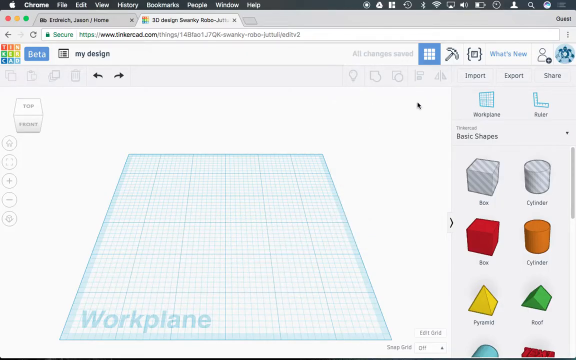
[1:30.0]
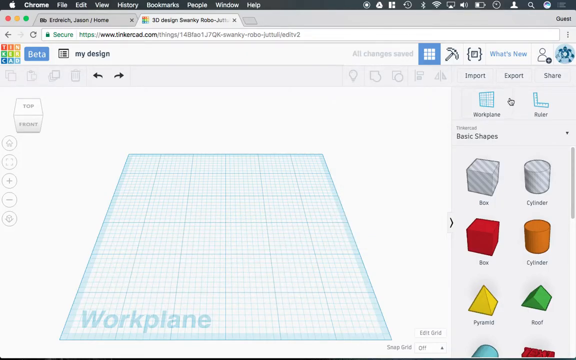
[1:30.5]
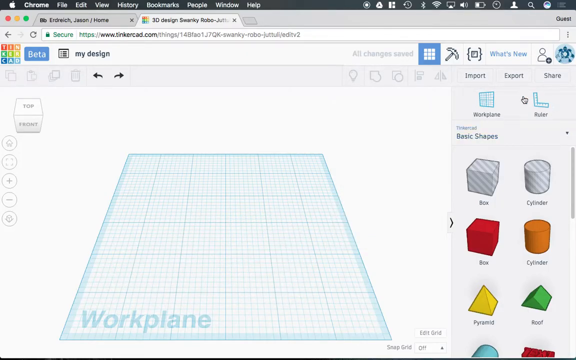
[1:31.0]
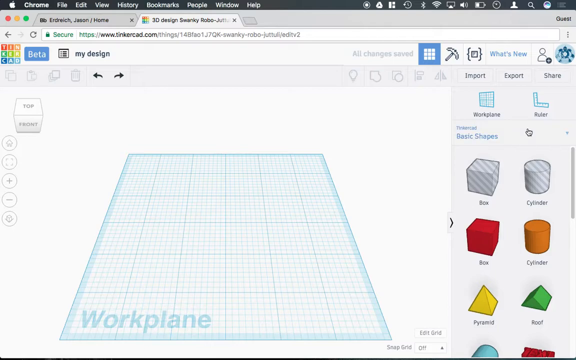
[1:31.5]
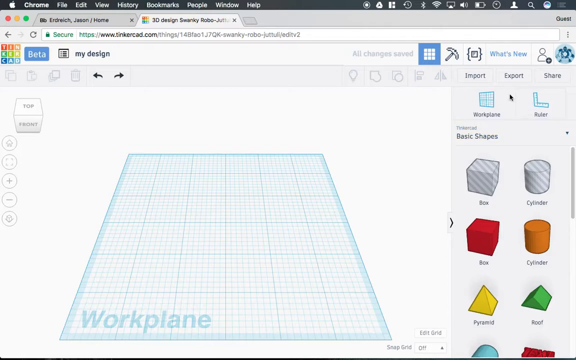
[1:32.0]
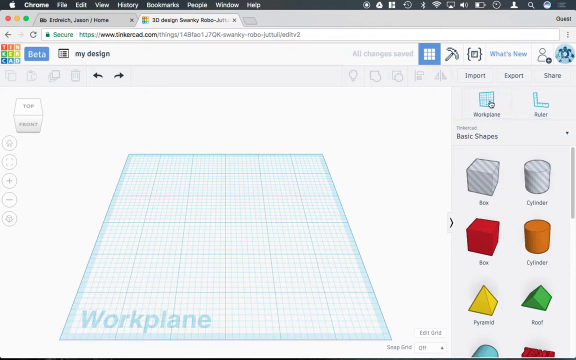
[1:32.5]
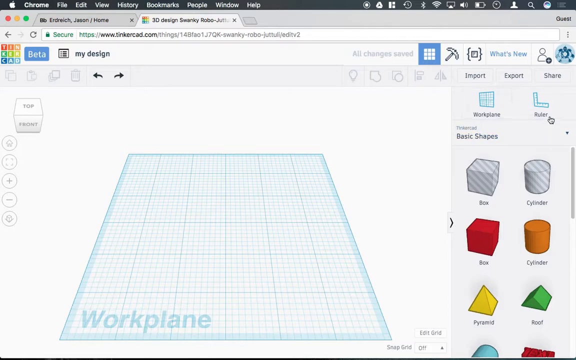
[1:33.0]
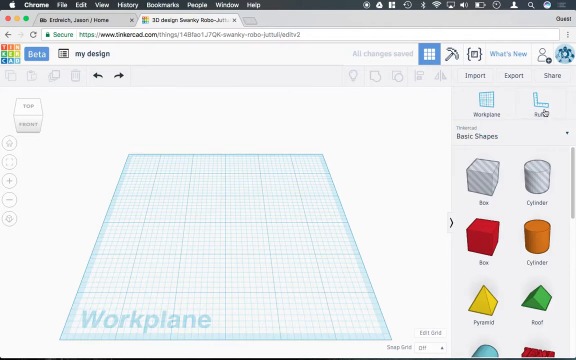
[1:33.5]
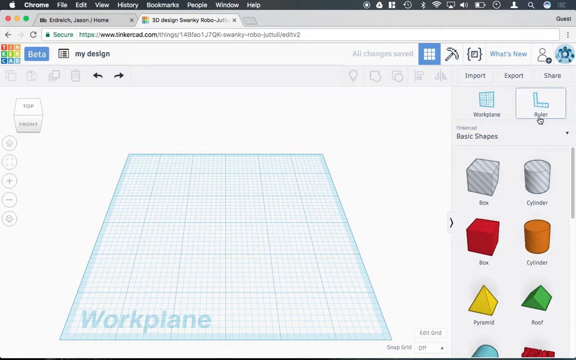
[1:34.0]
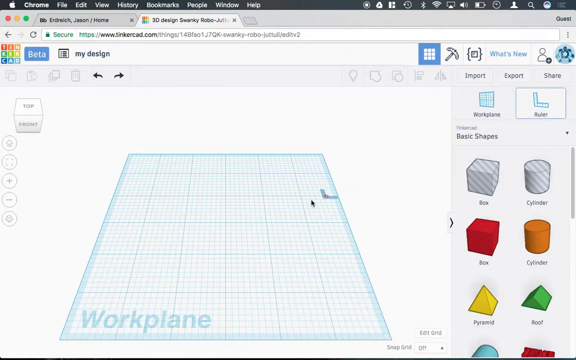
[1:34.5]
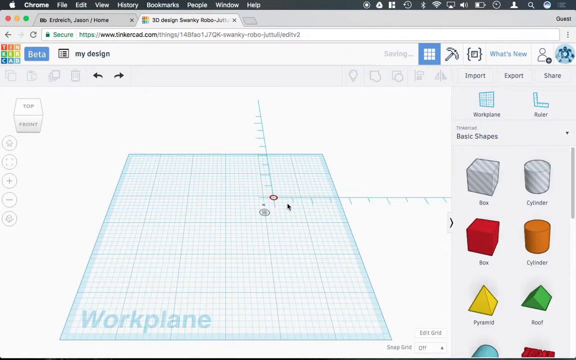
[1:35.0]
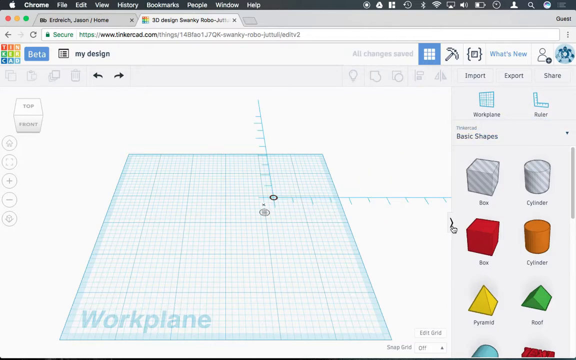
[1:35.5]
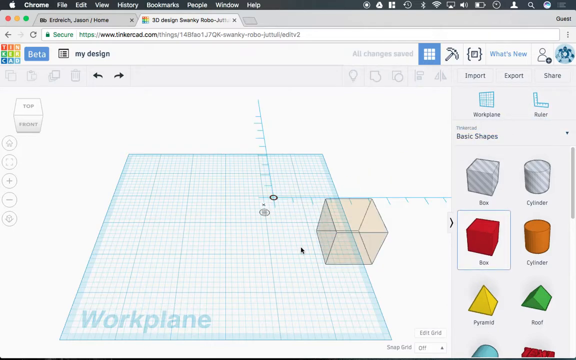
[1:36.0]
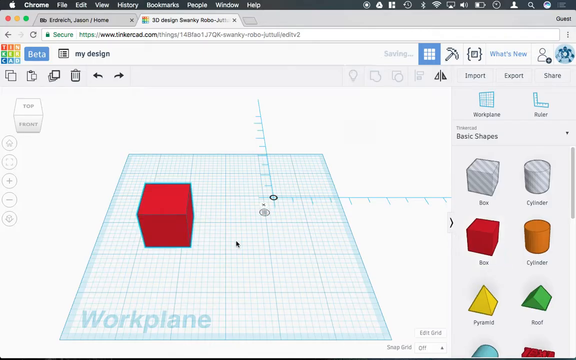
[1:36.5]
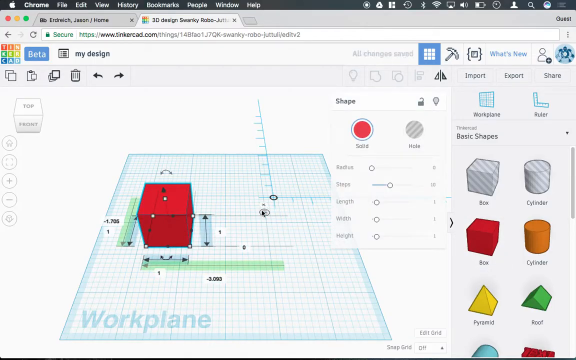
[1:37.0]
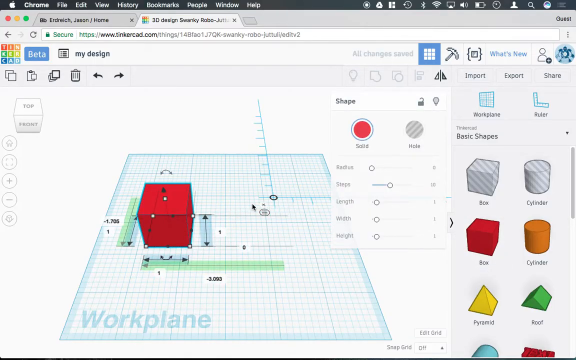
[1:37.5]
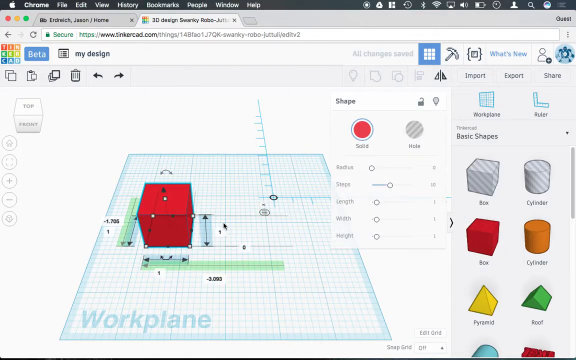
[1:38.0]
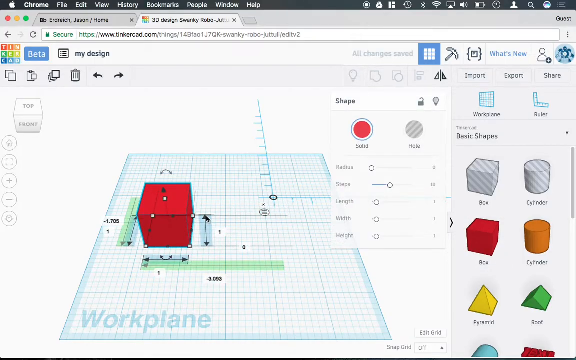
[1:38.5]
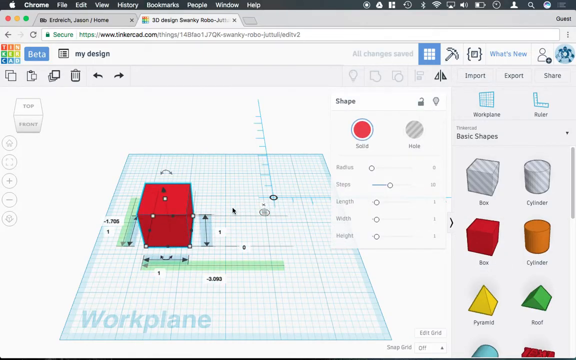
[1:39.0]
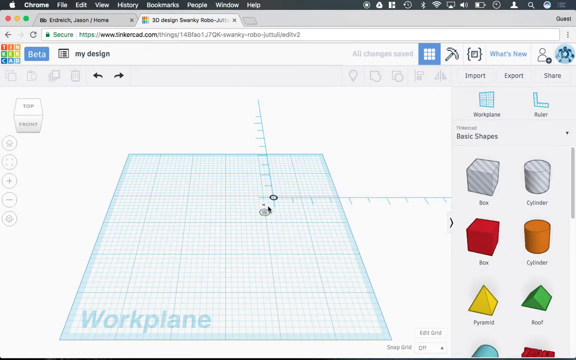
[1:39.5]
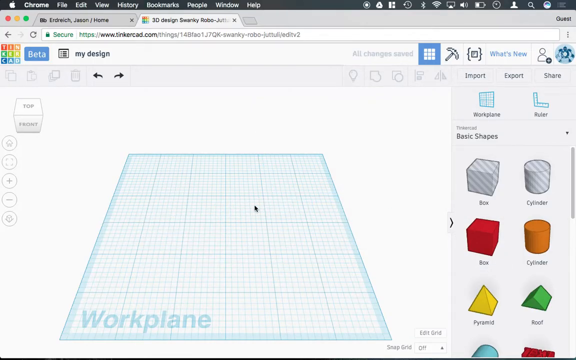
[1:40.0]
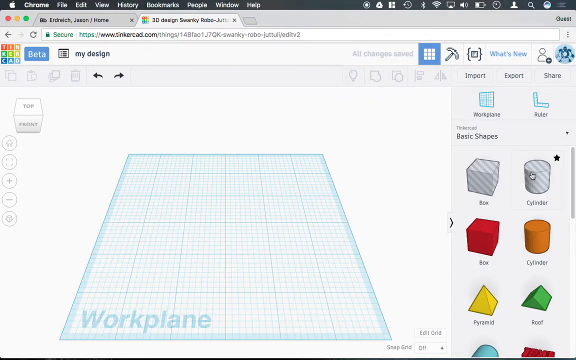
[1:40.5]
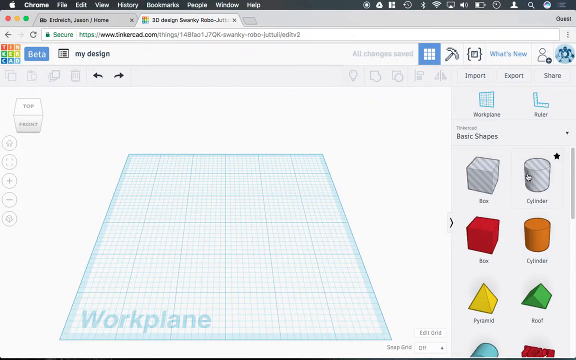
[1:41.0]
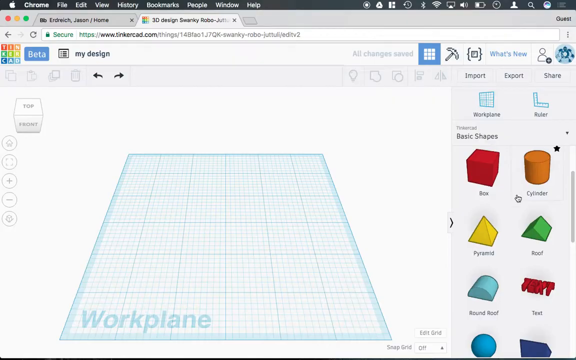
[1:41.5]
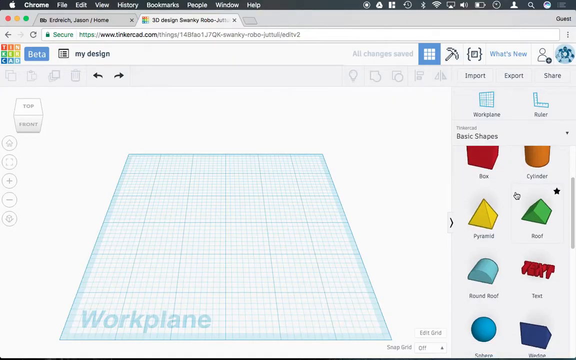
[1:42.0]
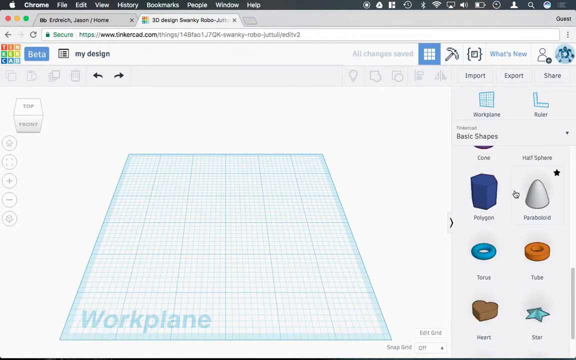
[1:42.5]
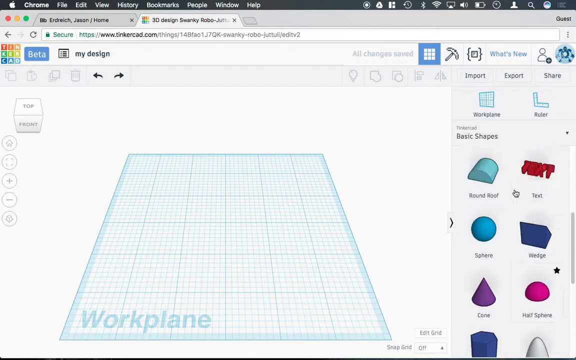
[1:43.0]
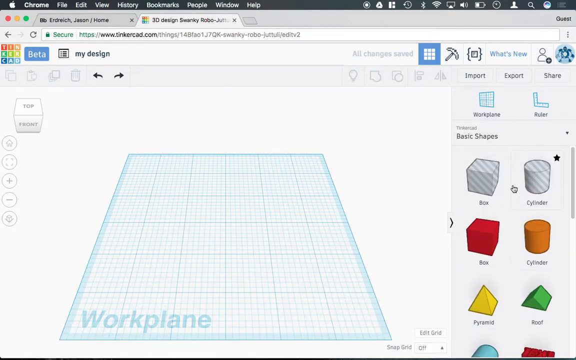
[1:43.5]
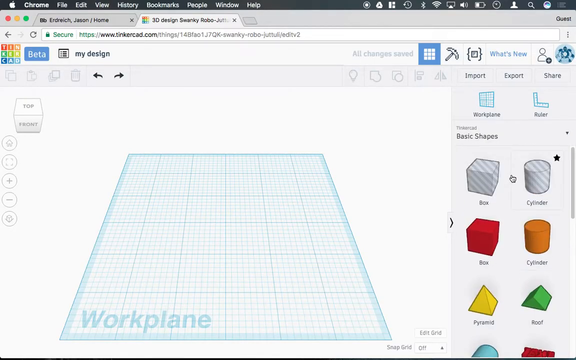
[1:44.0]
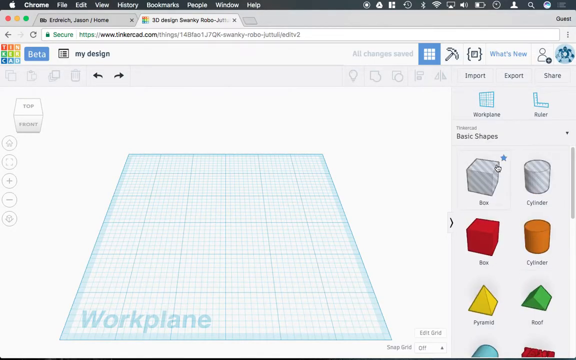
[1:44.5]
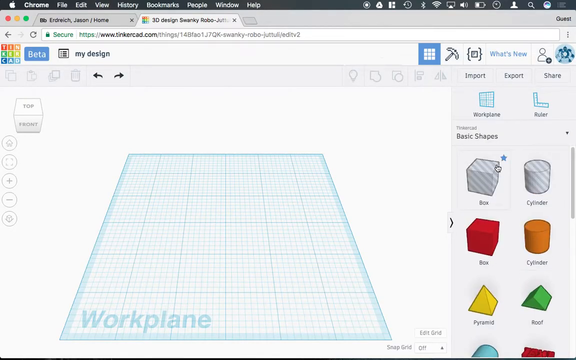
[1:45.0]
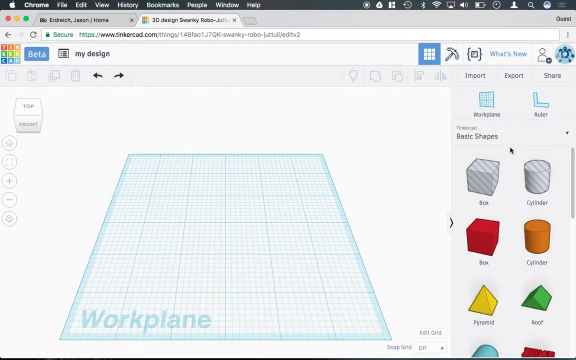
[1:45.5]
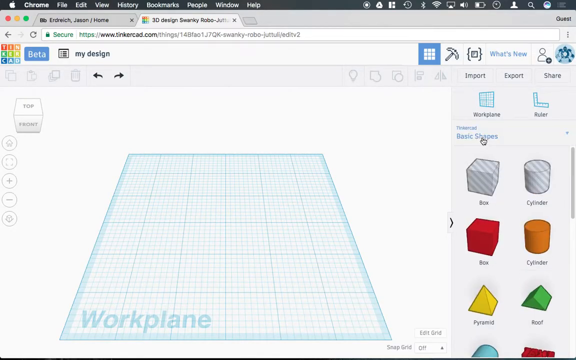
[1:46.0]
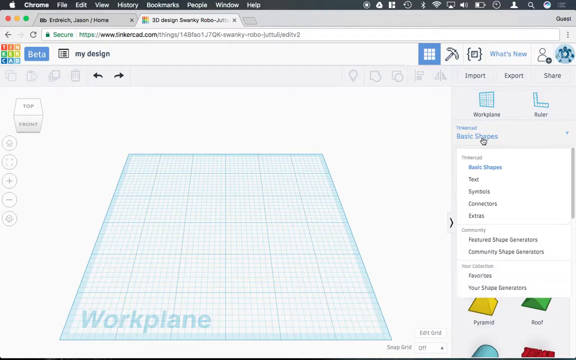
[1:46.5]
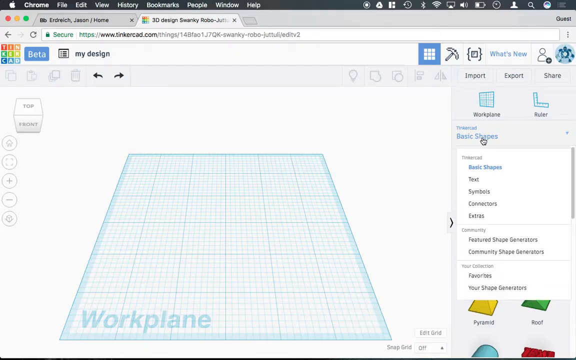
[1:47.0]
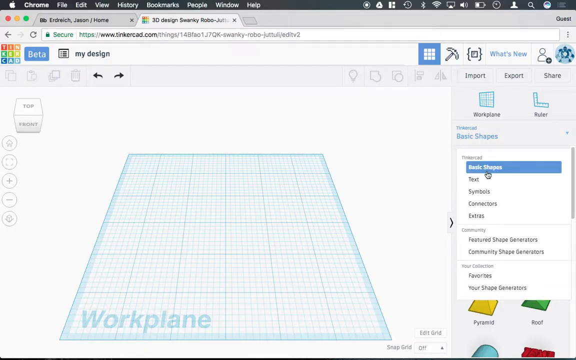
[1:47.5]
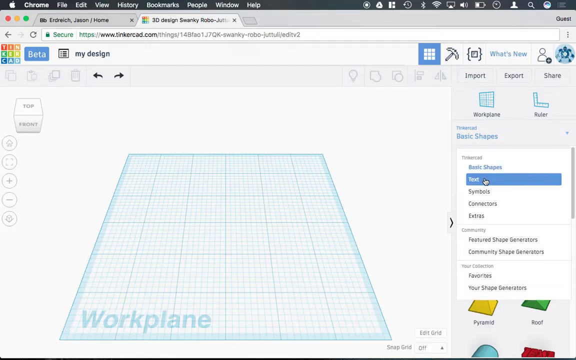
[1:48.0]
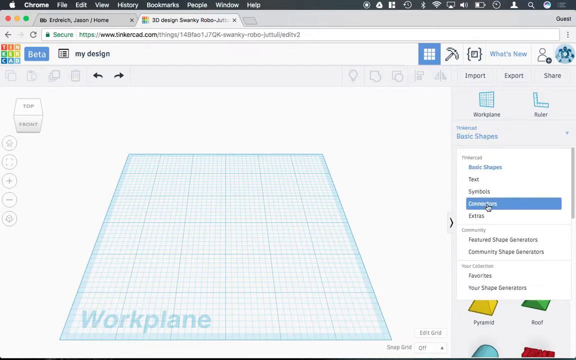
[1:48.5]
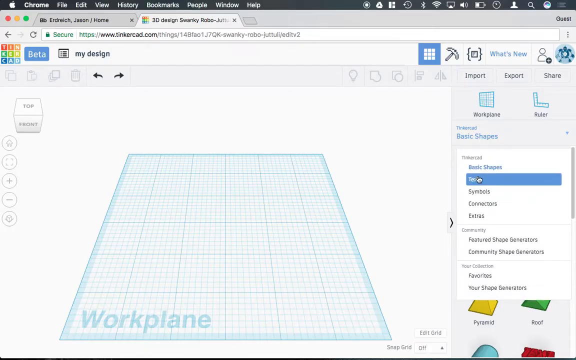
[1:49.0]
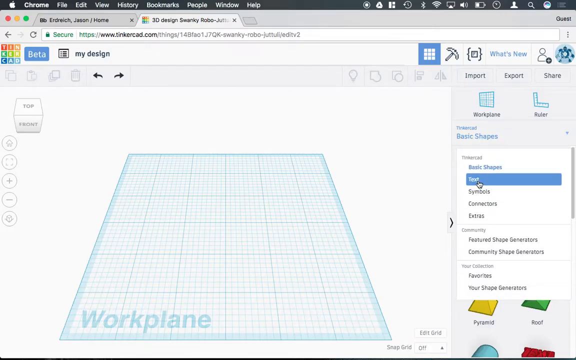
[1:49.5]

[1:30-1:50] The user hovers over the right-hand side of the screen again to select the ruler and drags and drops it onto the top right-hand corner of the workplane, then selects the red cube-shaped box again from the basic shapes section on the right-hand side and drags it onto the screen. As the red box is placed on the workplane, its dimensions instantly appear on screen with blue highlighting, black double-tipped arrows, and black text indicating the length, height, width, and other dimensions of the shape. The user then deletes both the red box and the ruler and scrolls through the basic shapes section, showing the available shapes: box, cylinder, pyramid, roof, round roof, text, Bridge, Half-Spear, Cone, Polygon, Torus, Tube, Paraboloid, Heart, and Star. The user scrolls back up to the top and clicks on the drop-down menu labeled "Basic Shapes", which brings up other categories of designs that can be brought into the workplane: Text, Symbols, Connectors, Extra, Featured Shape Generators, Community Shape Generators, Favorites, and Your Shape Generators.